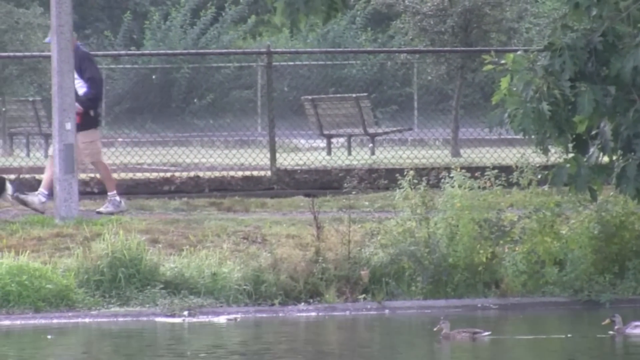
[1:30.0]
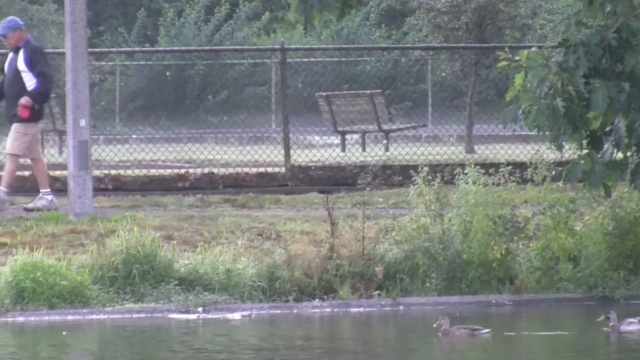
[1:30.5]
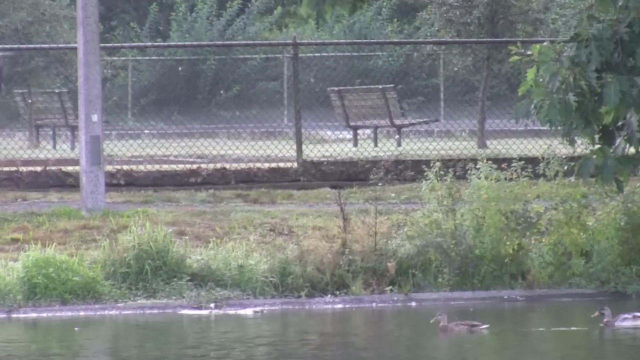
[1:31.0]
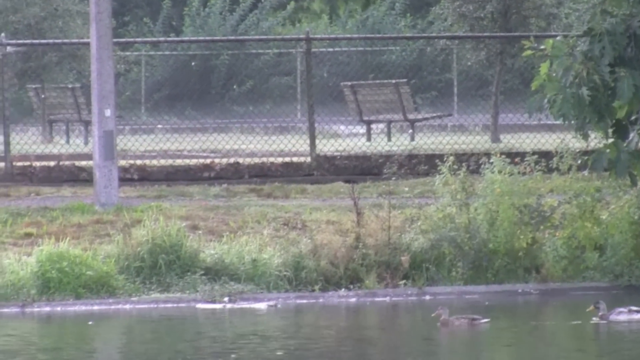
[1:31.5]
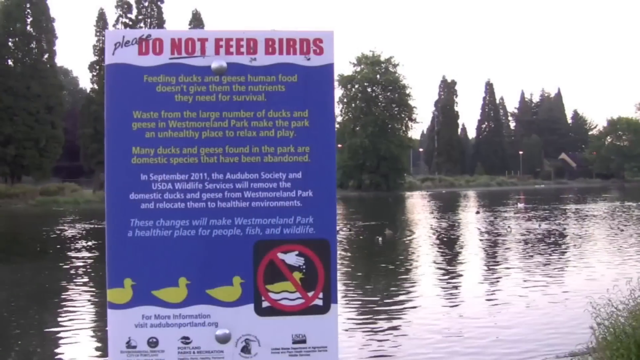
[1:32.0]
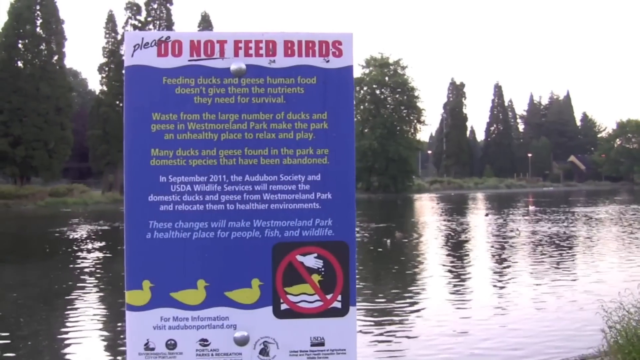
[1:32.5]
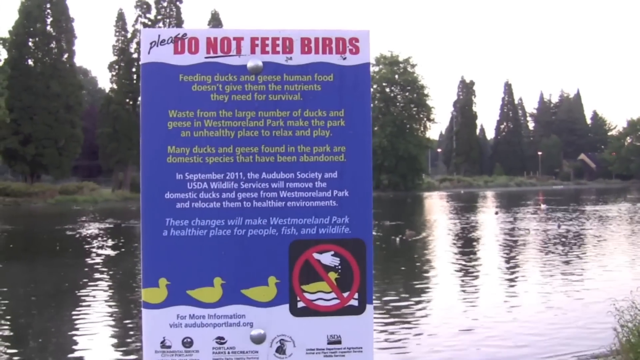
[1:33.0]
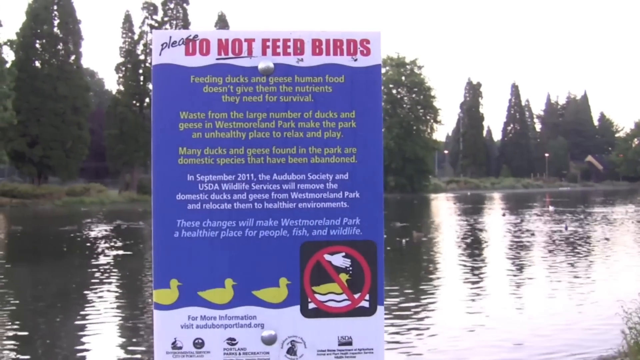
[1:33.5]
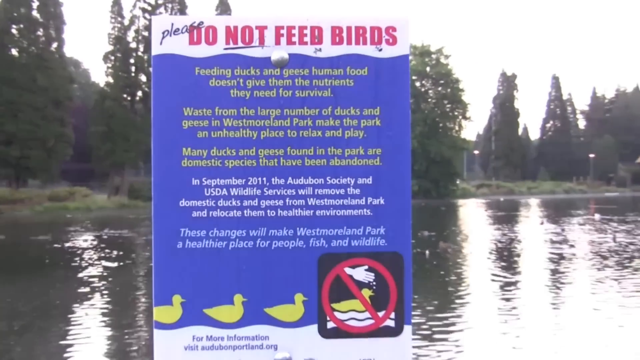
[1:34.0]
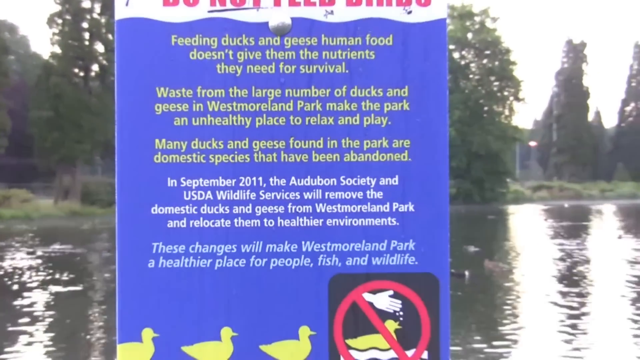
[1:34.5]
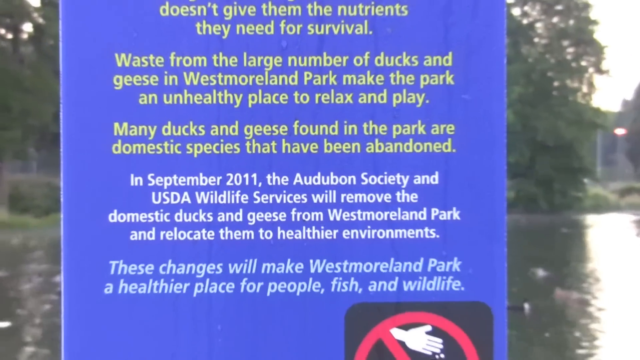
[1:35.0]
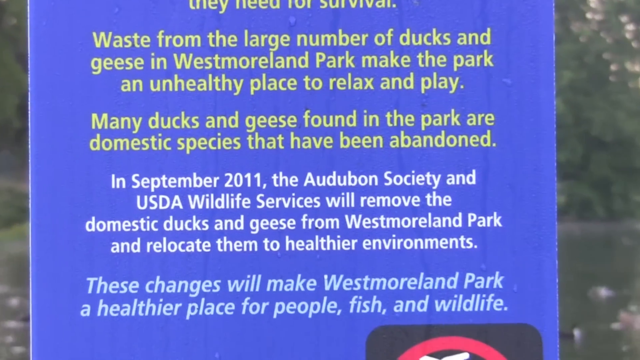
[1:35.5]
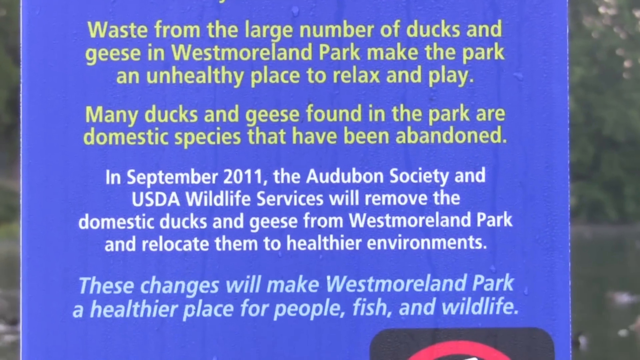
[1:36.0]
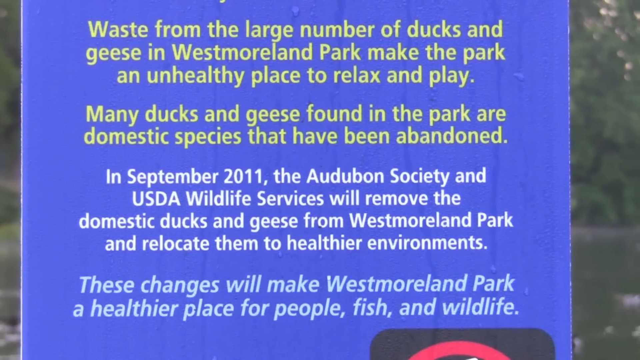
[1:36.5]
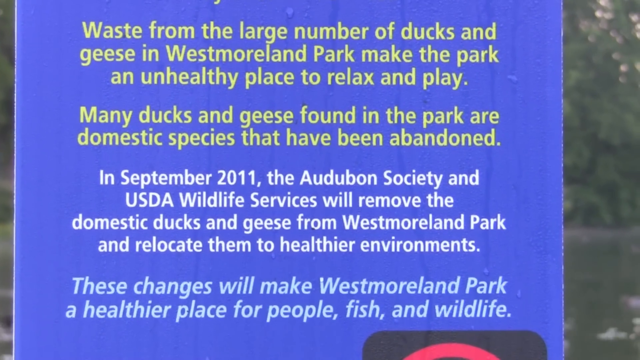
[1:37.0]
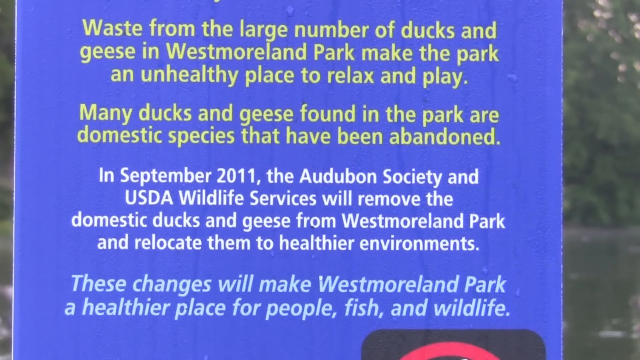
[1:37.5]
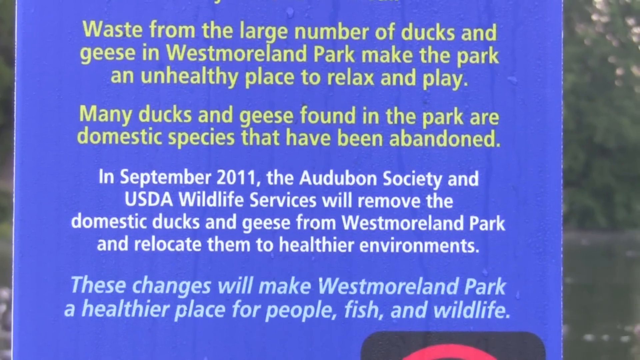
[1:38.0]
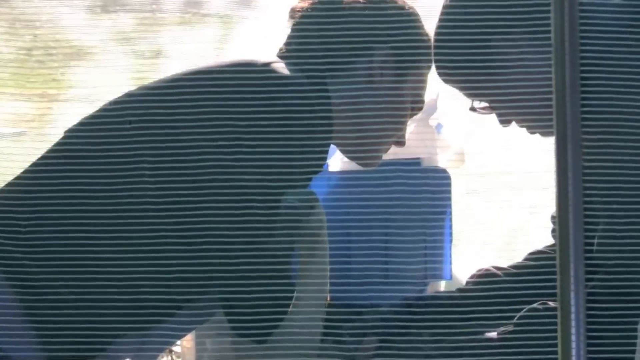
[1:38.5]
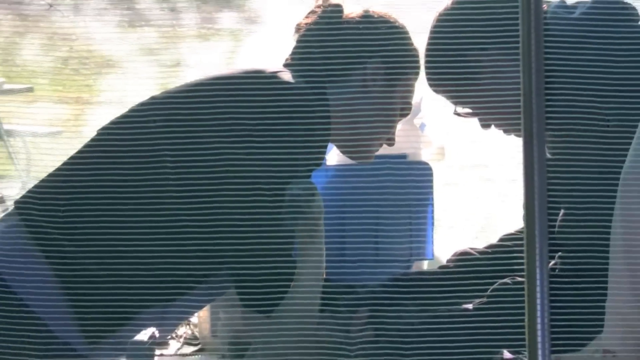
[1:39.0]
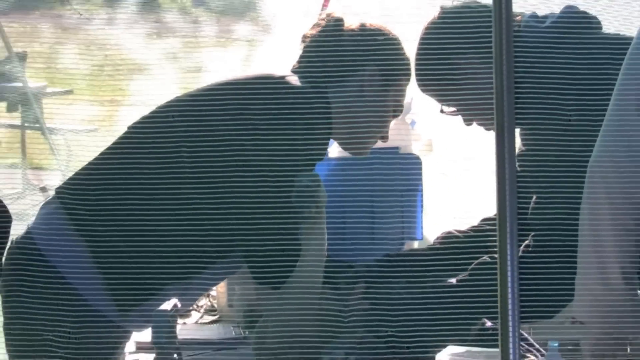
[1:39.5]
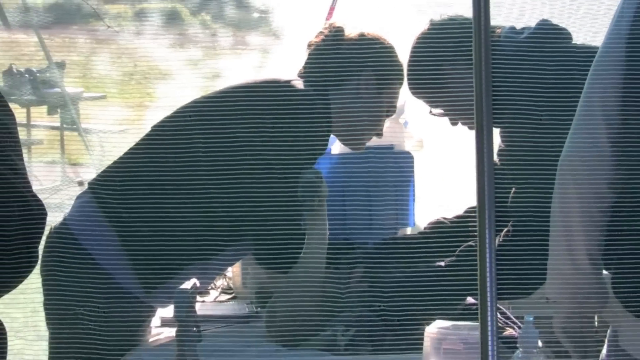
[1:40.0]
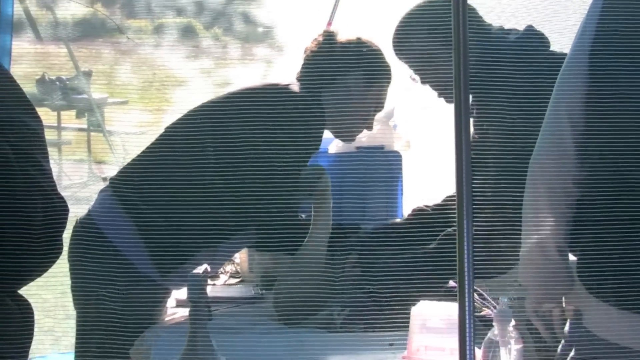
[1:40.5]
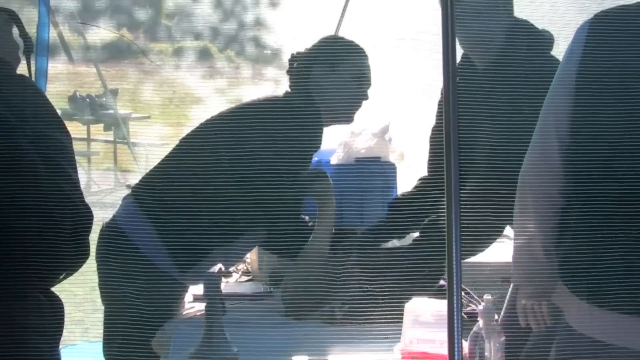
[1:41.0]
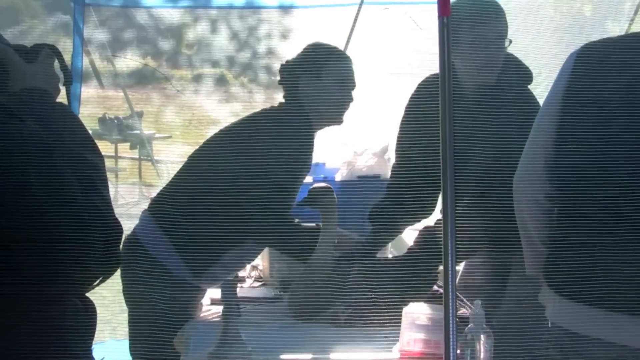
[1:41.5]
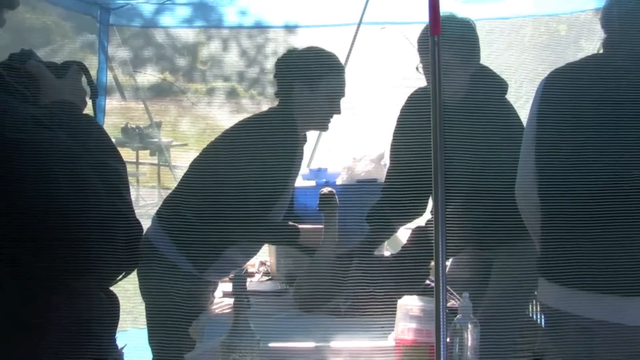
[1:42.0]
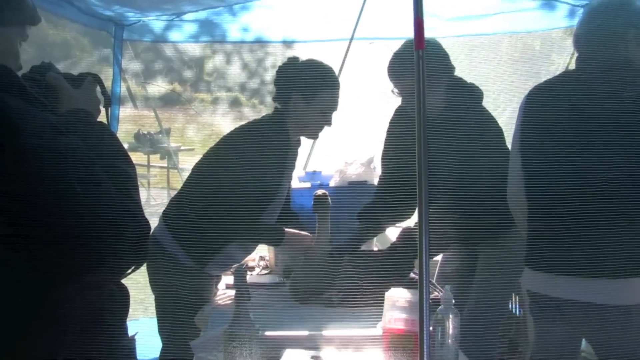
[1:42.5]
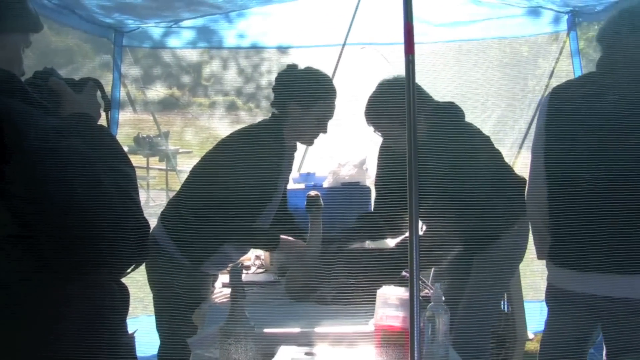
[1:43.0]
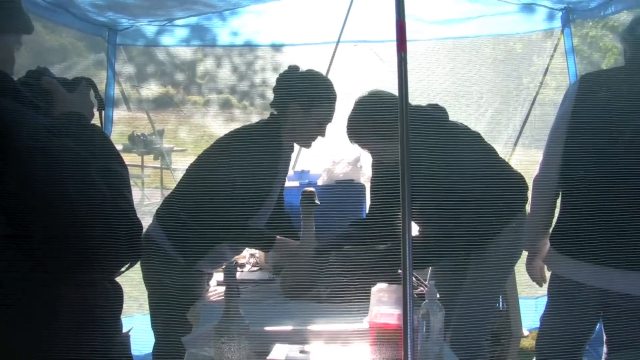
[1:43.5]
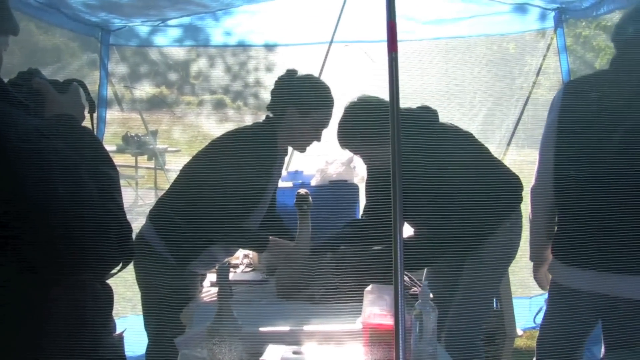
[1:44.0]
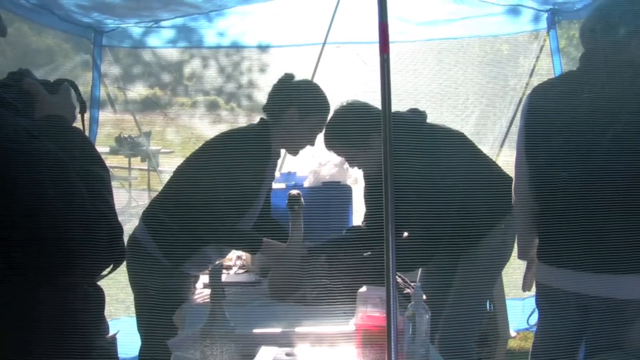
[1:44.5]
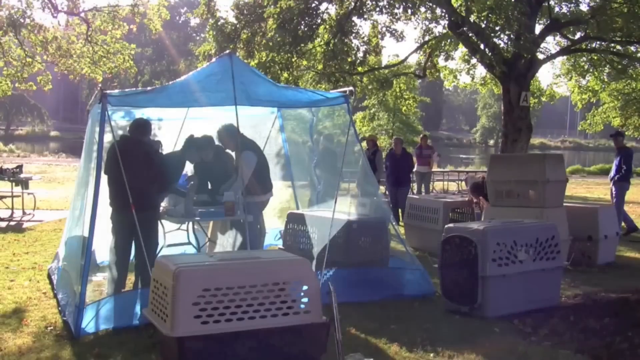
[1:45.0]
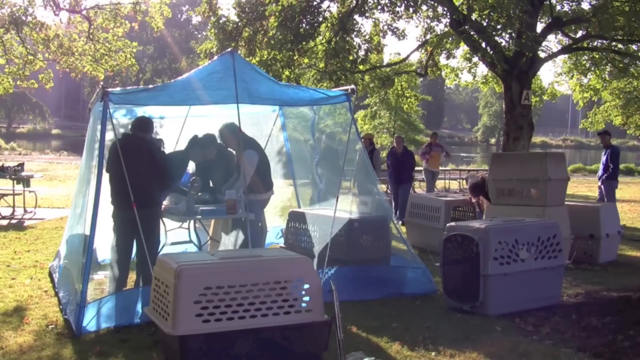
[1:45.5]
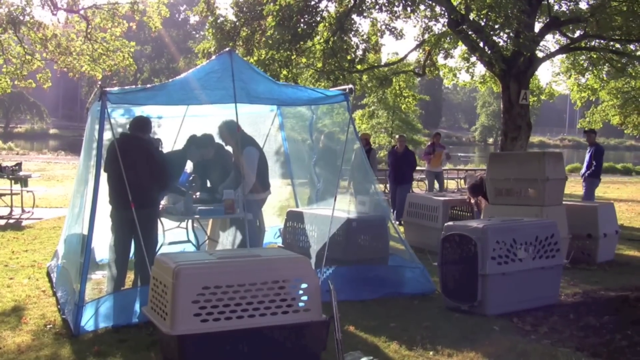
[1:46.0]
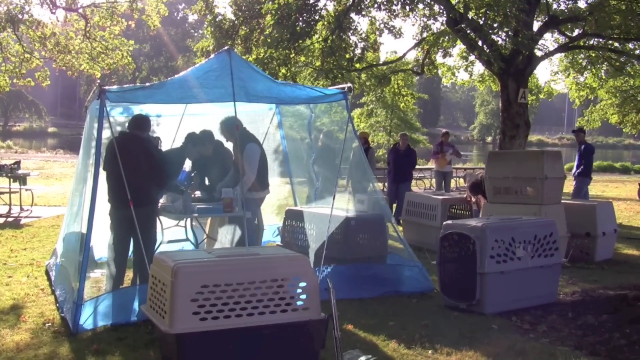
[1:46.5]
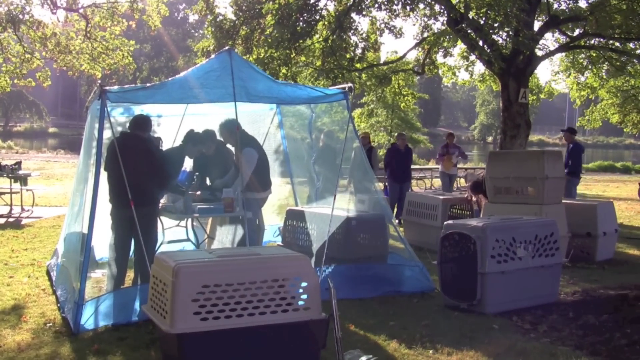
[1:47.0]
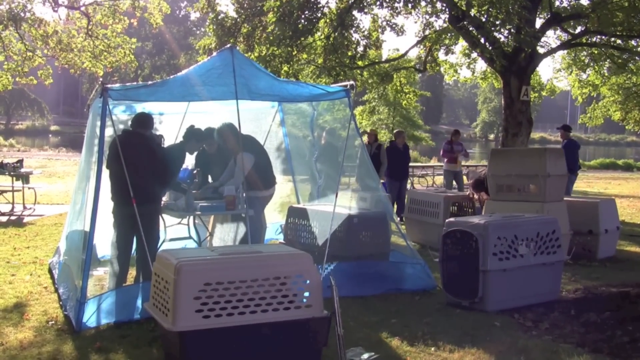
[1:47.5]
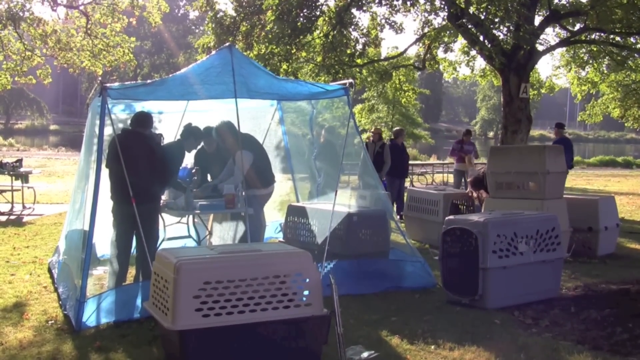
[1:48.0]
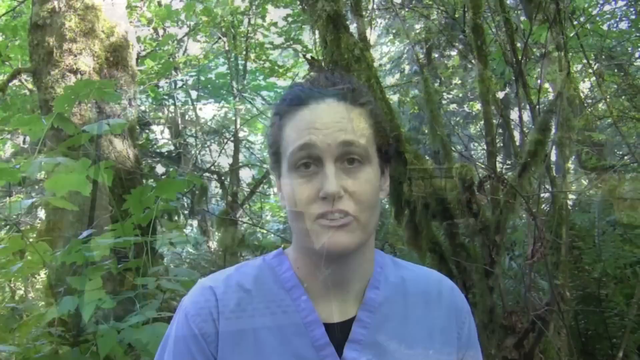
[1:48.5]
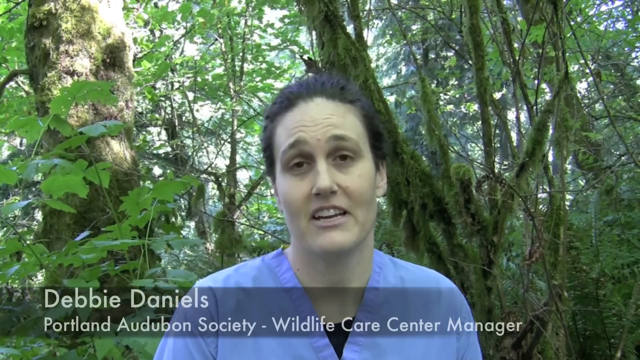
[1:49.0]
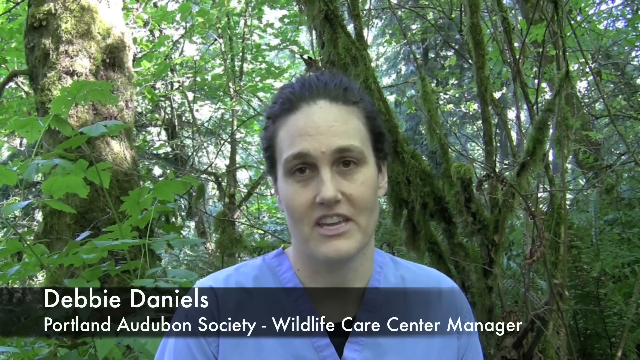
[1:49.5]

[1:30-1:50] The man walks his dog past a large metal pole. The video cuts to a rectangular sign posted near a pond, with tall trees on the far side of the pond in the background. The top of the sign reads "Please do not feed birds", and its text includes "Human food doesn't give them the nutrients they need for survival. Waste from the large number of ducks and geese in Westmoreland Park make the park an unhealthy place to relax and play. Many ducks and geese found in the park are domestic species that have been abandoned. In September 2011, the Audubon Society and USDA Wildlife Services will remove the domestic ducks and geese from Westmoreland Park and relocate them to healthier environments. These changes will make Westmoreland Park a healthier place". At the bottom of the sign is an image of four ducks in a line, and an image of a hand feeding the front duck with a red circle around the duck and hand and a line through it, indicating not to feed the birds. The video lingers on the sign for a moment, then cuts to people inside a net tent holding ducks and geese on a table and examining them. Multiple large animal crates are stacked outside the tent.